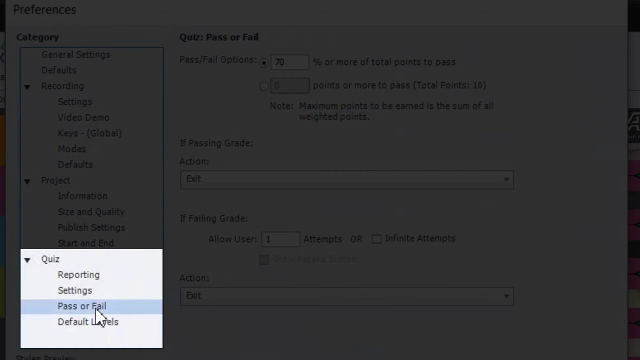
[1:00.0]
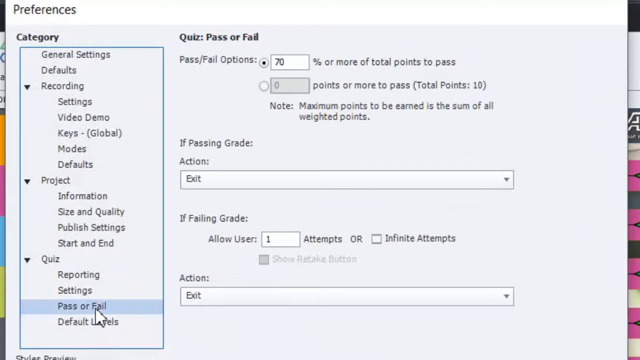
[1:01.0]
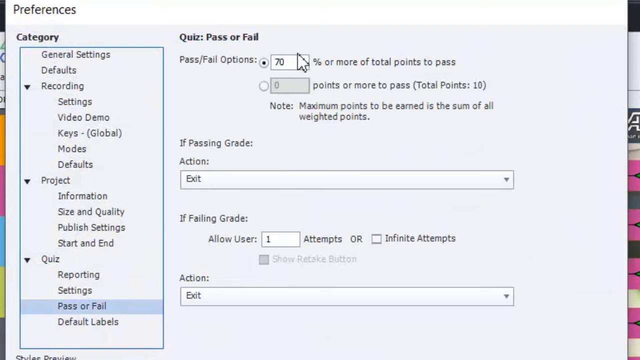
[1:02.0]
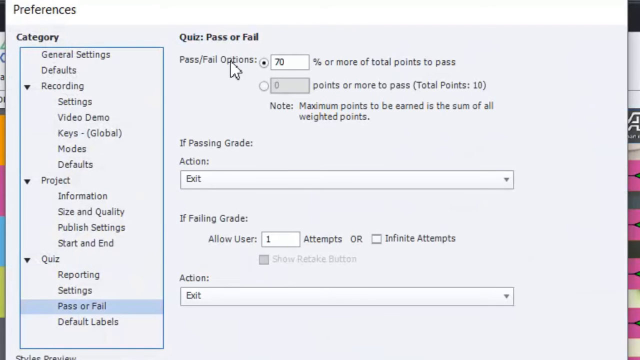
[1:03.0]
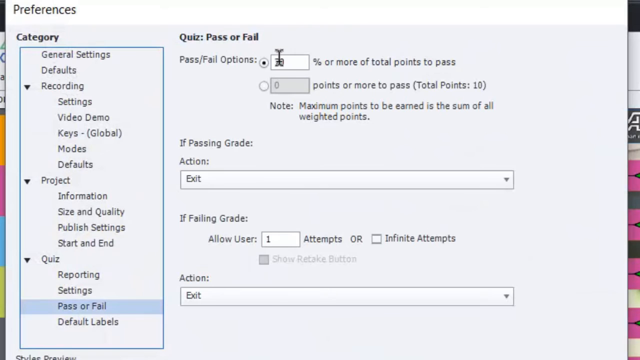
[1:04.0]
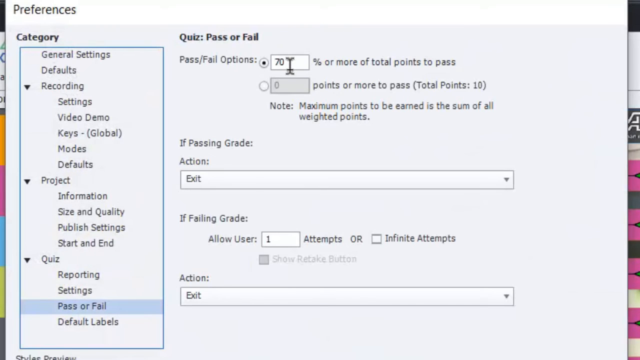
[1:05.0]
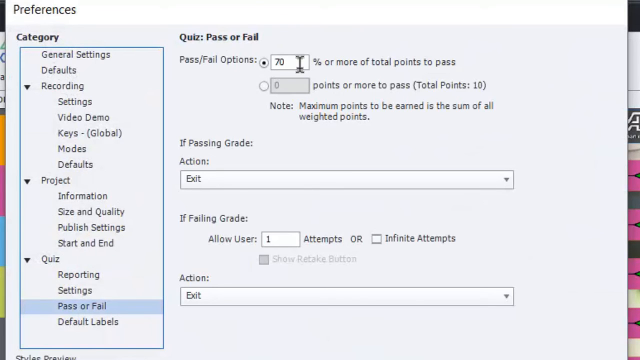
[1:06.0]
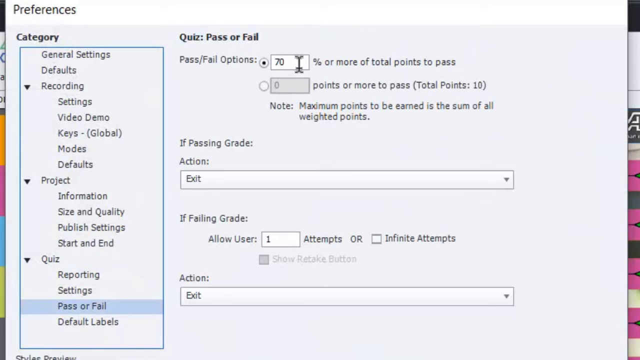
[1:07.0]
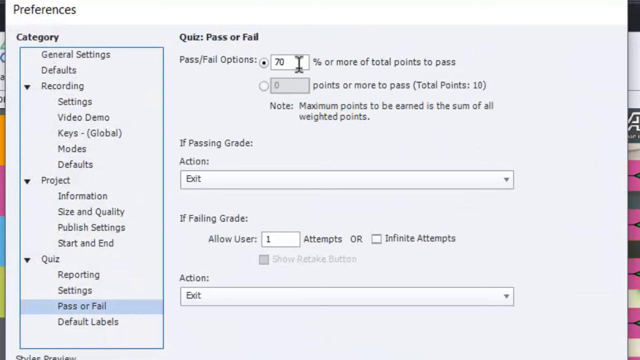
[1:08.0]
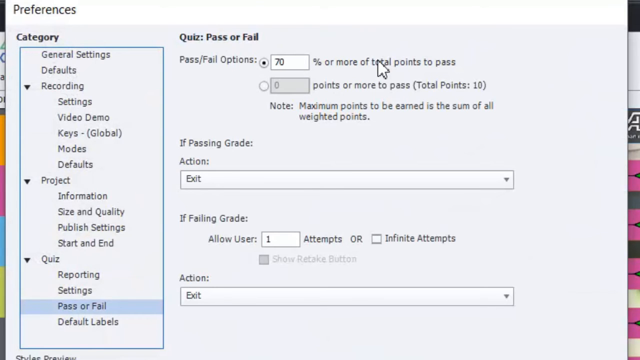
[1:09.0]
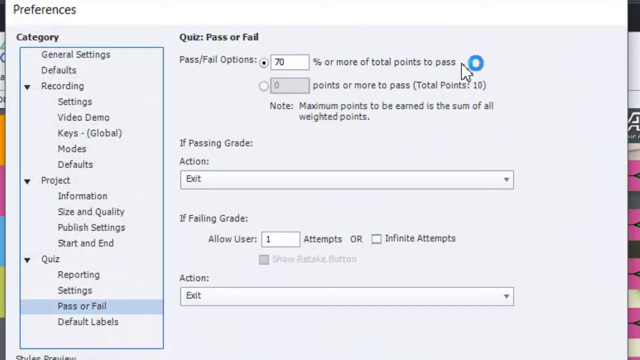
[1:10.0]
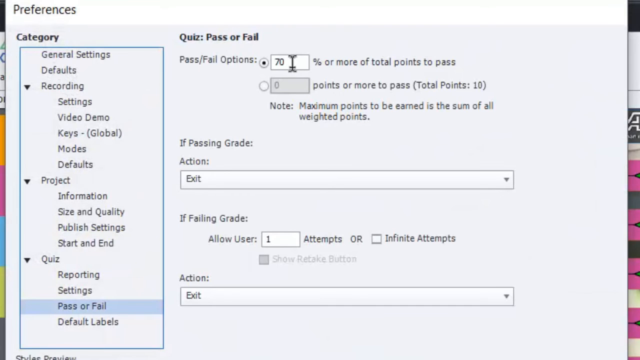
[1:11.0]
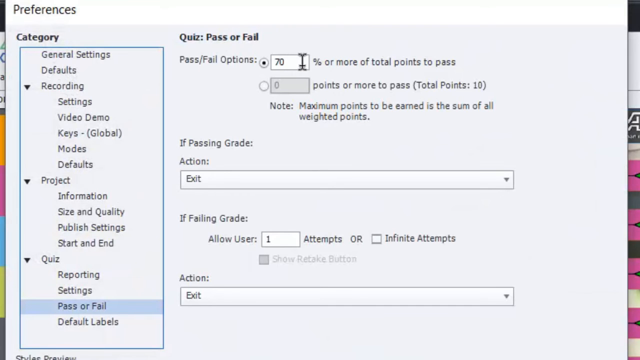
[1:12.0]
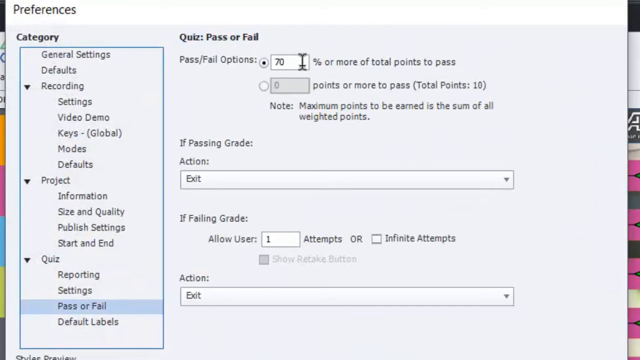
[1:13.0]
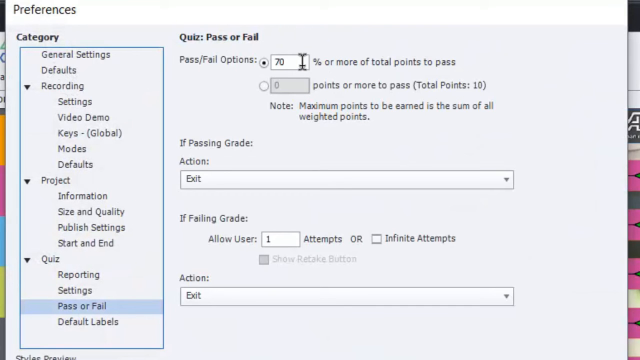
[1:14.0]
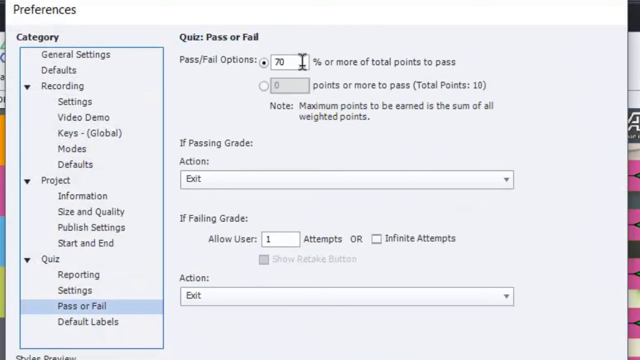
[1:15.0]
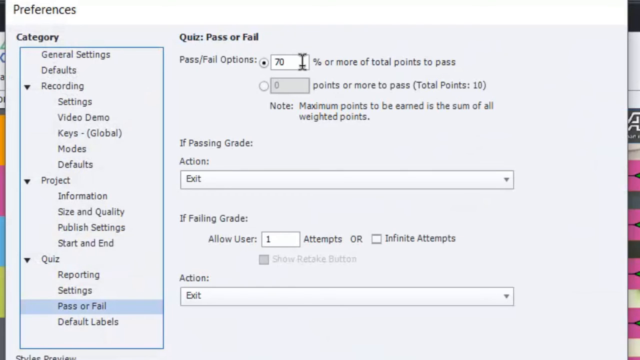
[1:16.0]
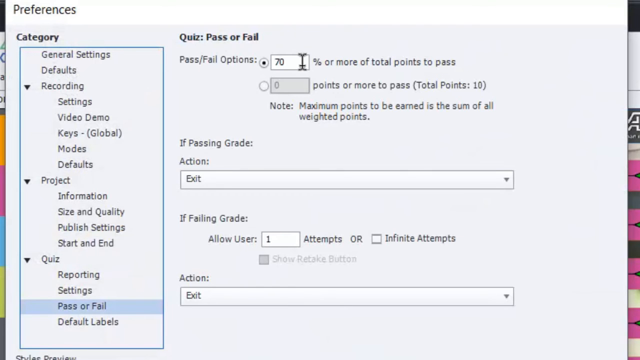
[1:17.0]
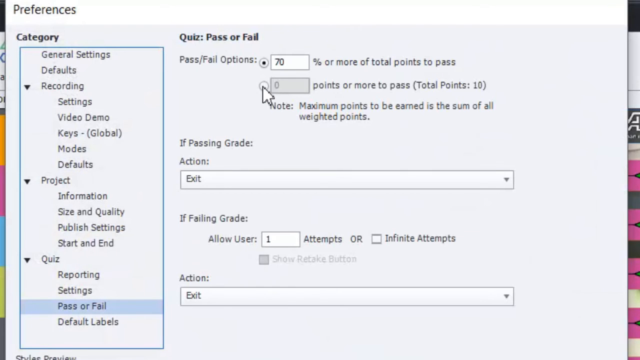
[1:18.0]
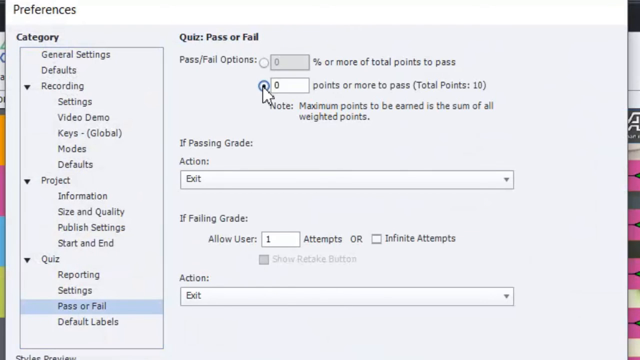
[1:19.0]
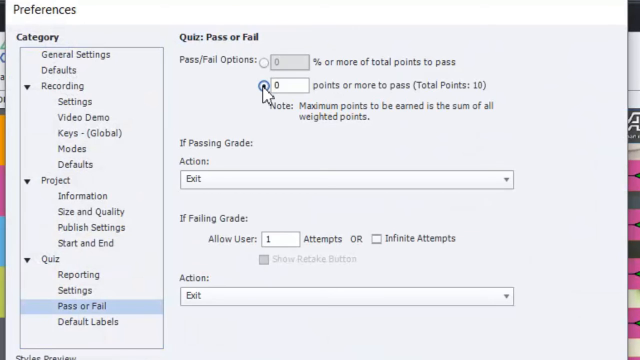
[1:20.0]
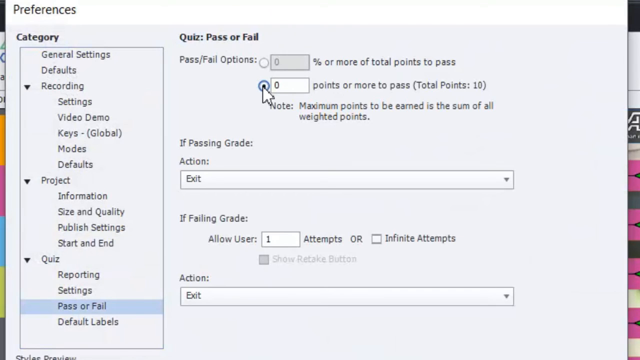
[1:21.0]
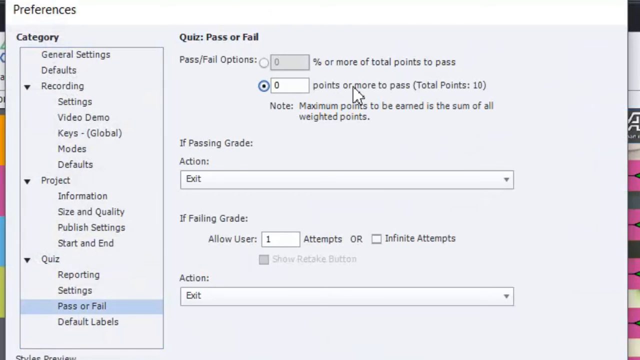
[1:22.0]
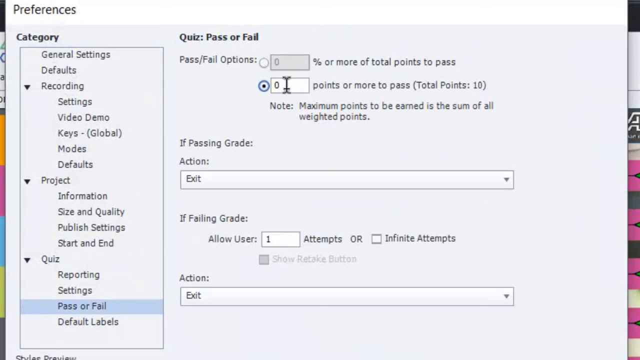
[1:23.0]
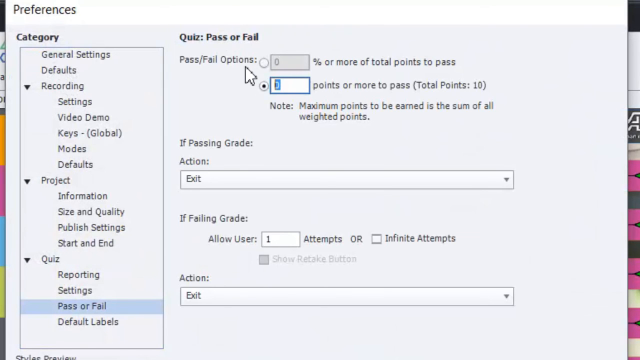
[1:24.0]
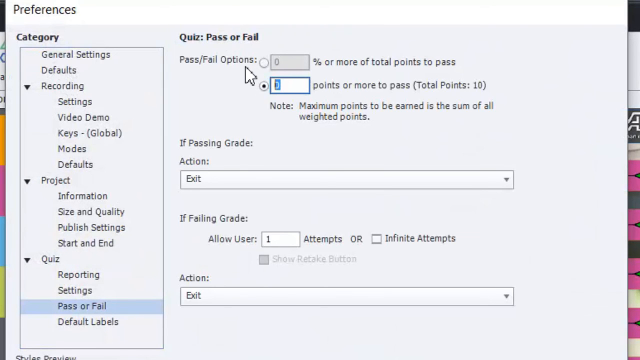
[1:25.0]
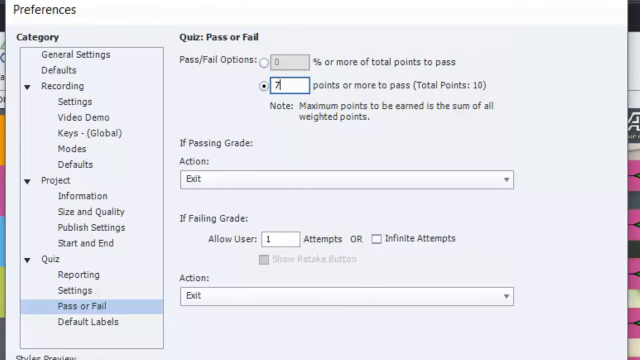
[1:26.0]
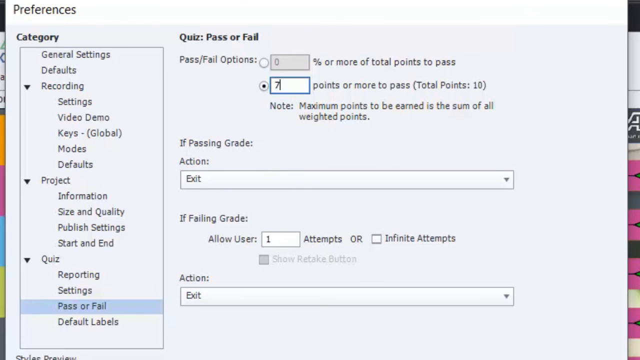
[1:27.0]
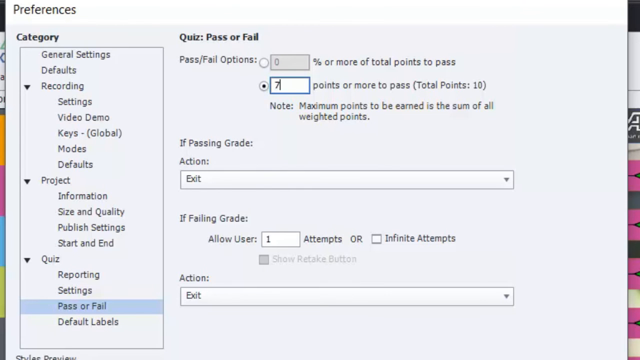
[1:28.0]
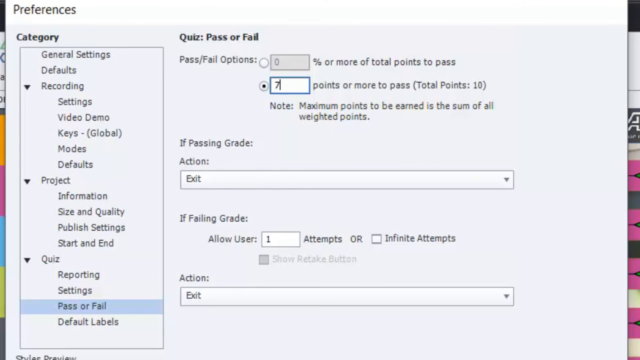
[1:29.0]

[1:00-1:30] With pass or fail clicked in the menu, the pass or fail options appear. The first bullet reads "70% or more of total points to pass", and the presenter hovers the cursor over the 70, then over the second bullet point below it, "points or more to pass total points", and inputs seven. The quiz section with the pass fail option is highlighted while the other parts of the screen grey out to focus on what is relevant. Below are a couple of drop-downs: "if passing grade action exit" and "if failing grade allow one user attempts or infinite attempt action exit".